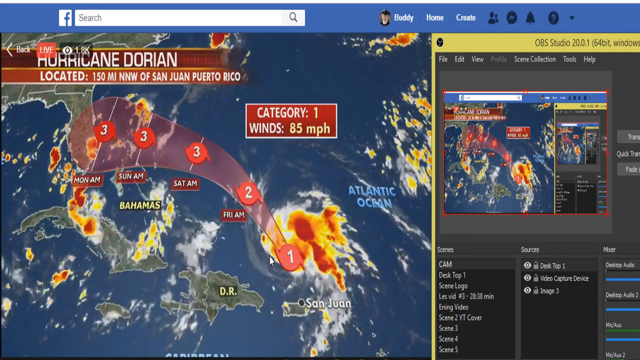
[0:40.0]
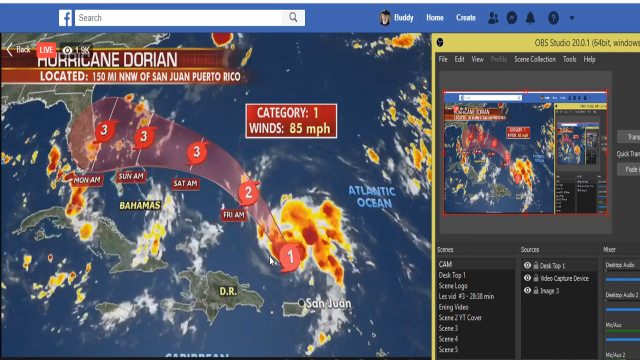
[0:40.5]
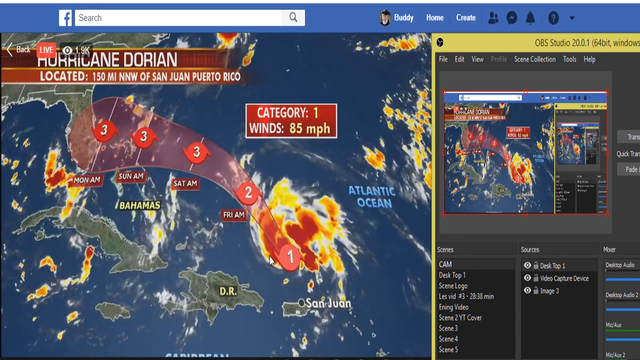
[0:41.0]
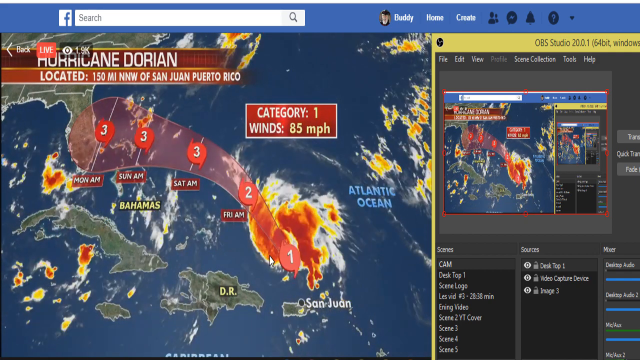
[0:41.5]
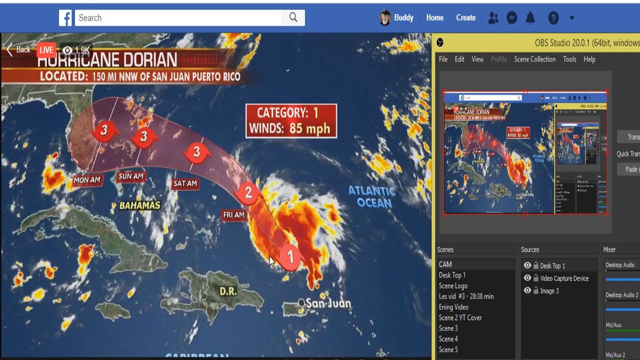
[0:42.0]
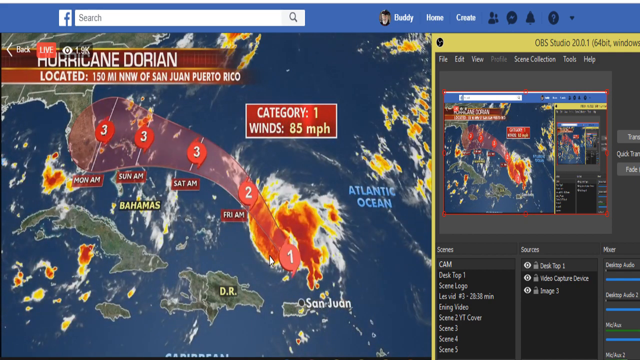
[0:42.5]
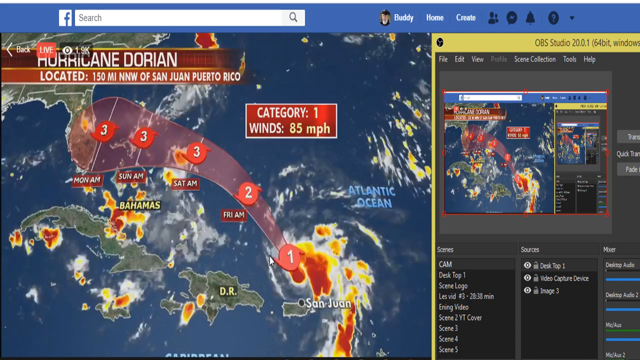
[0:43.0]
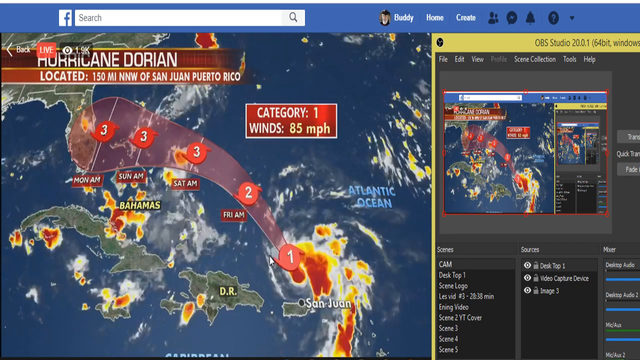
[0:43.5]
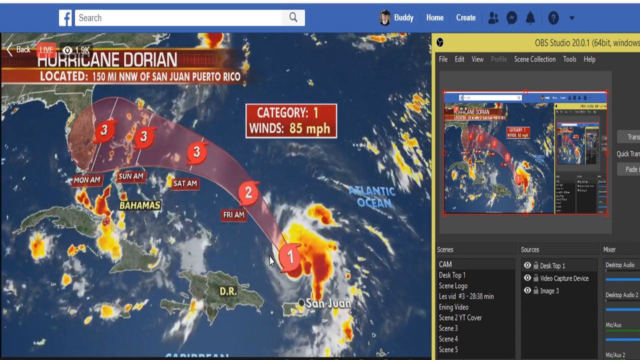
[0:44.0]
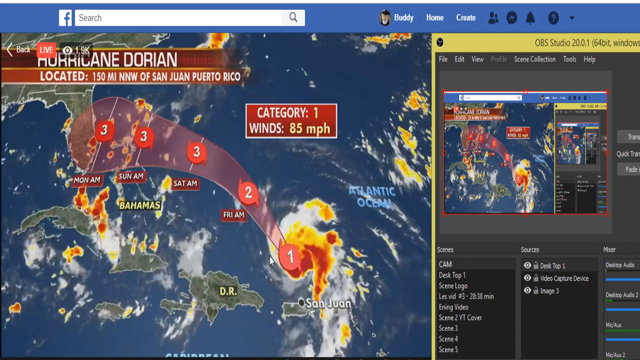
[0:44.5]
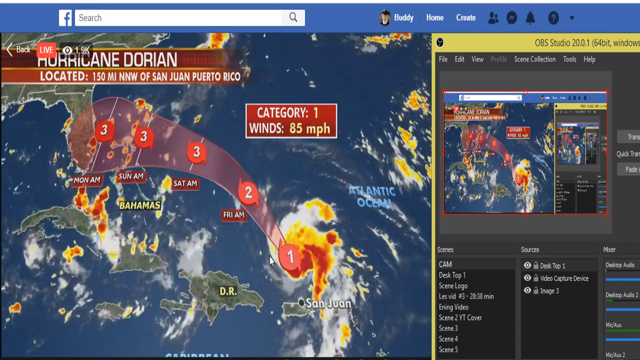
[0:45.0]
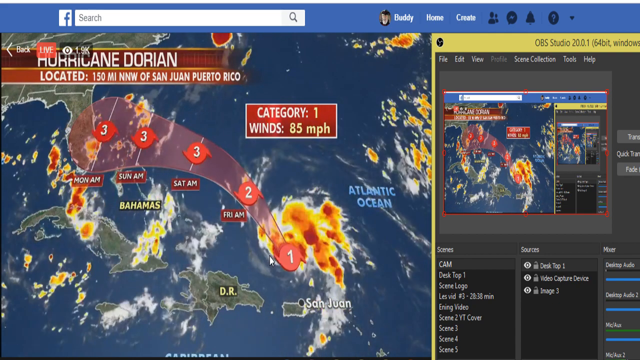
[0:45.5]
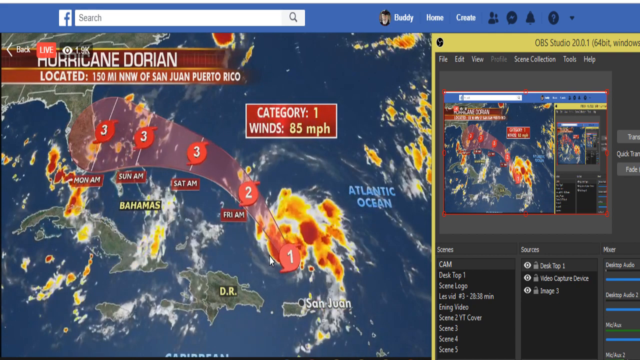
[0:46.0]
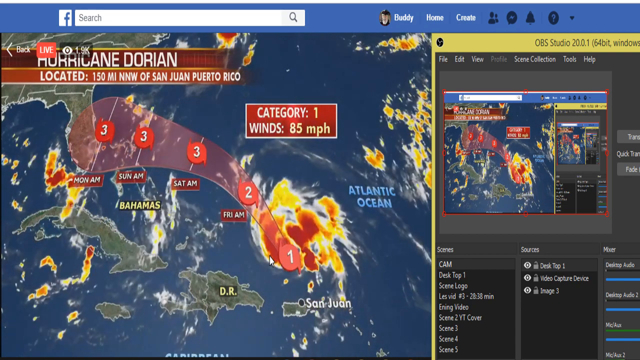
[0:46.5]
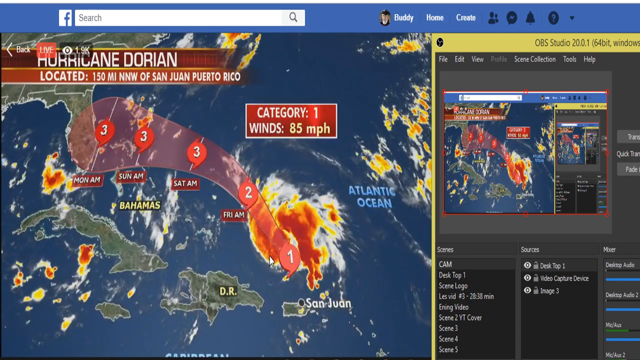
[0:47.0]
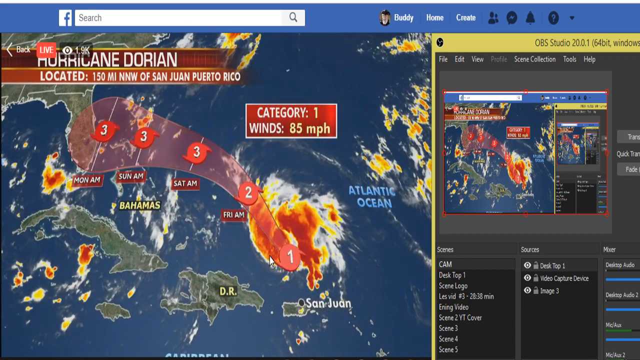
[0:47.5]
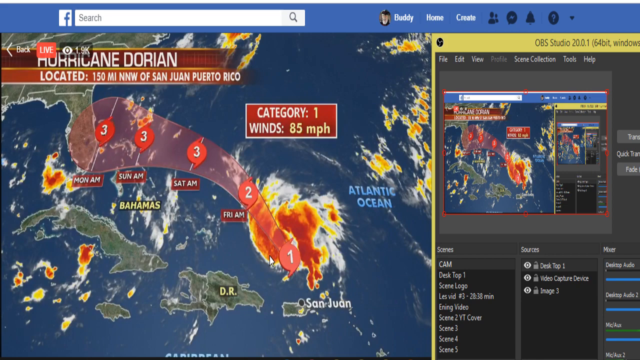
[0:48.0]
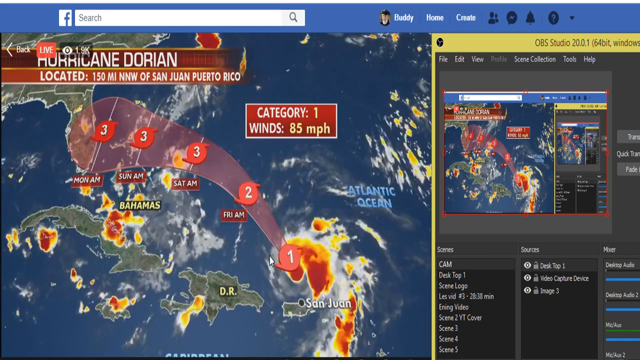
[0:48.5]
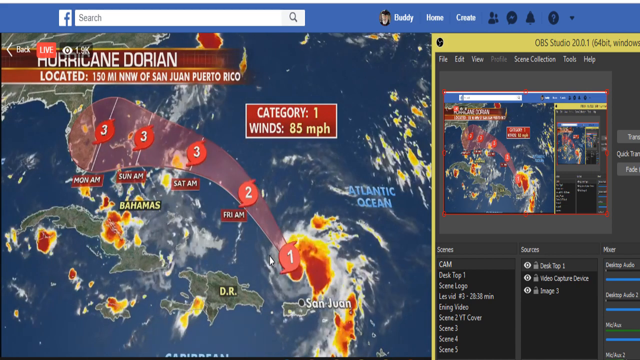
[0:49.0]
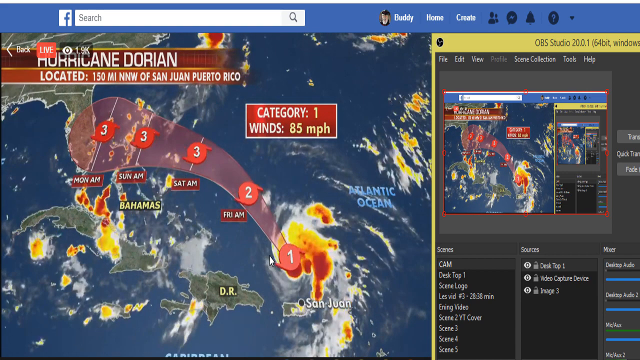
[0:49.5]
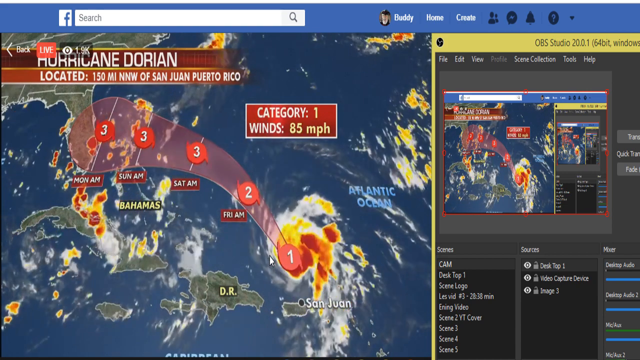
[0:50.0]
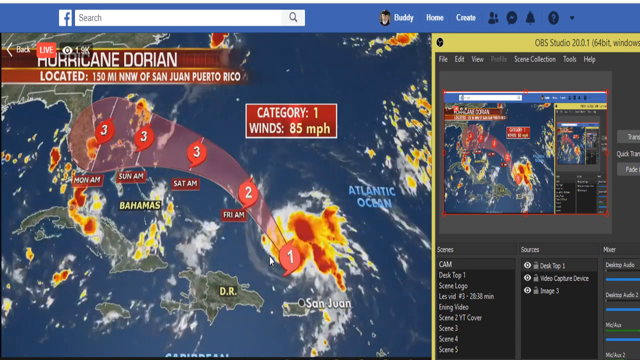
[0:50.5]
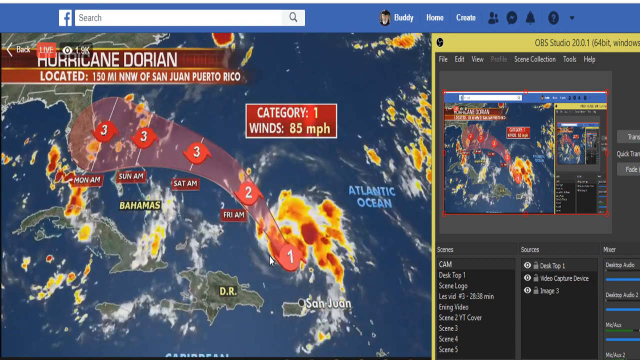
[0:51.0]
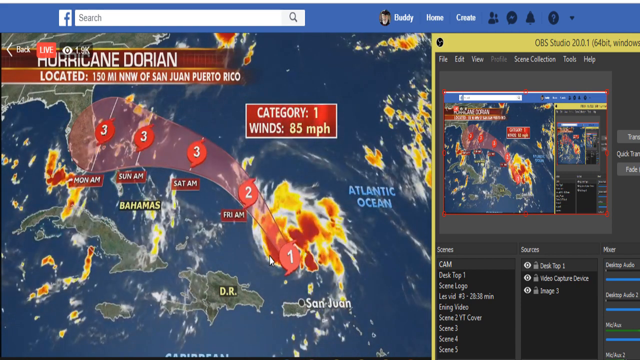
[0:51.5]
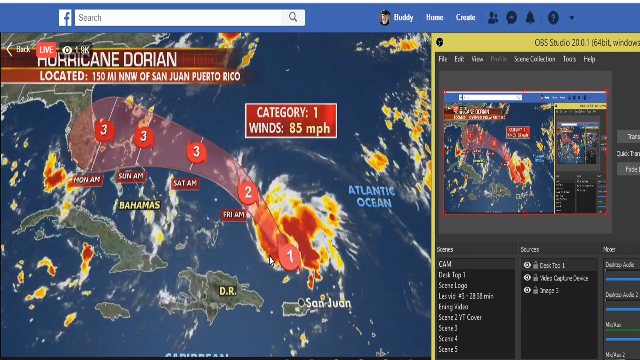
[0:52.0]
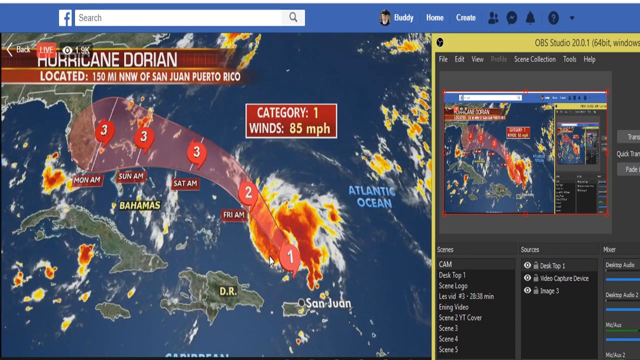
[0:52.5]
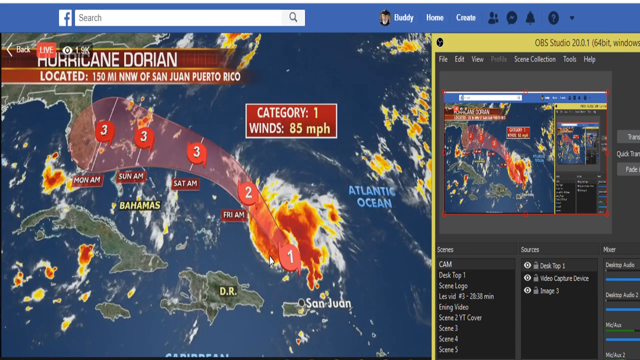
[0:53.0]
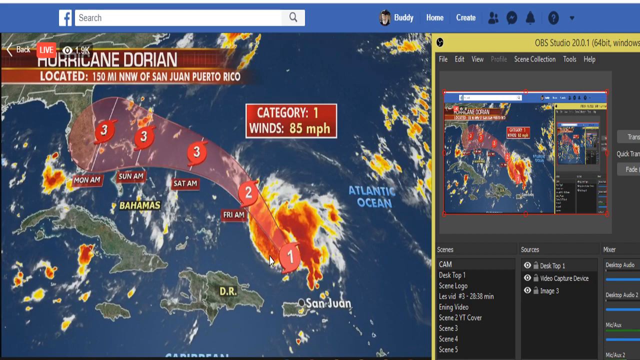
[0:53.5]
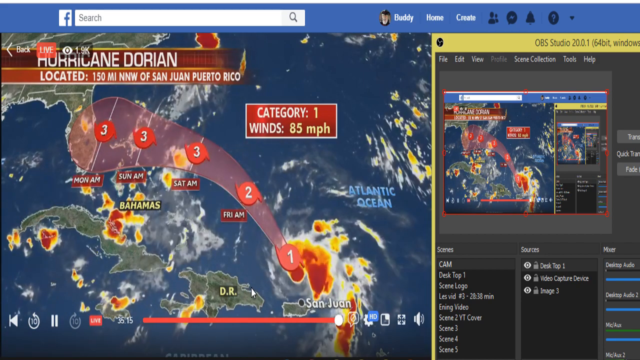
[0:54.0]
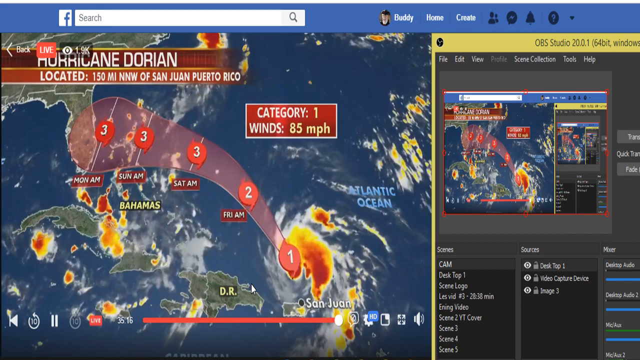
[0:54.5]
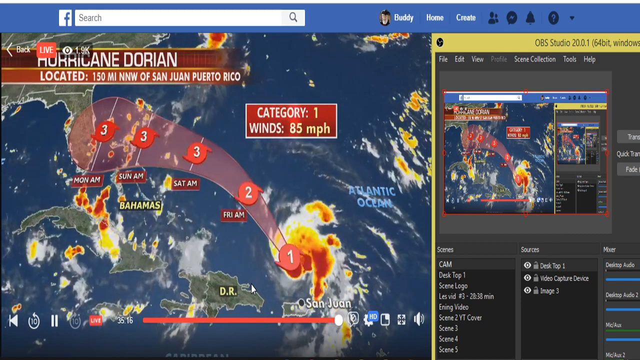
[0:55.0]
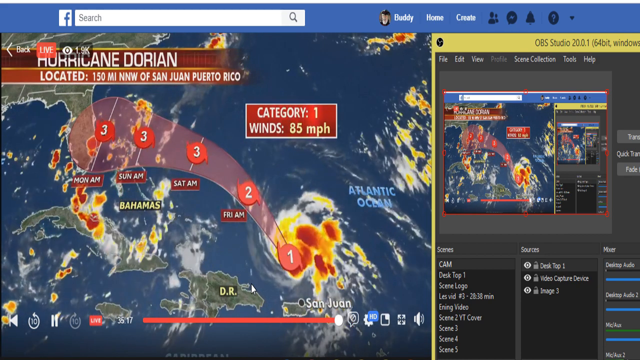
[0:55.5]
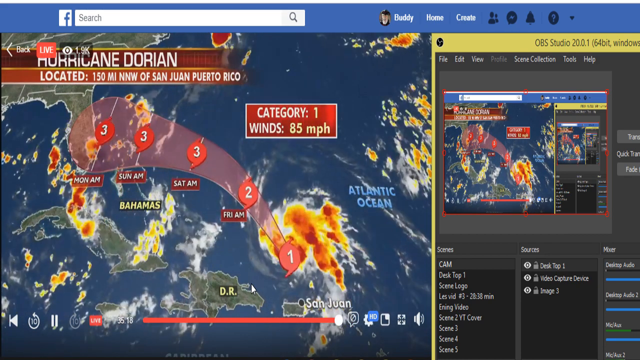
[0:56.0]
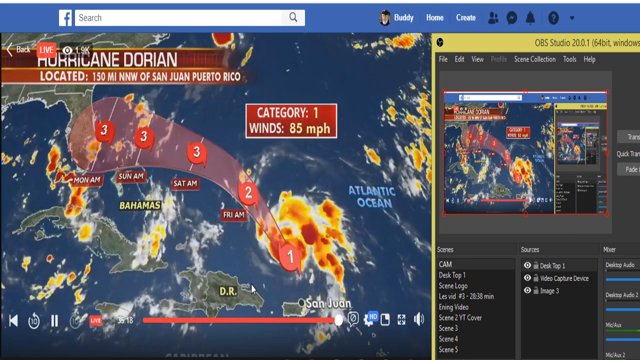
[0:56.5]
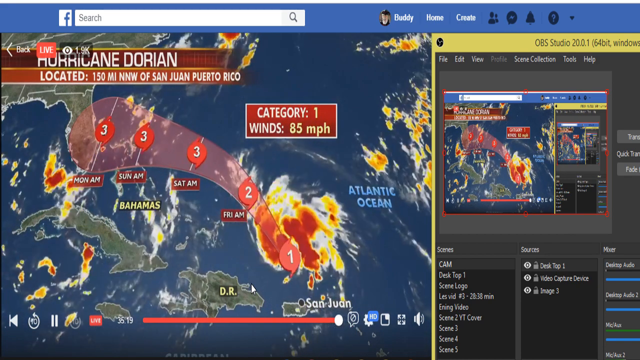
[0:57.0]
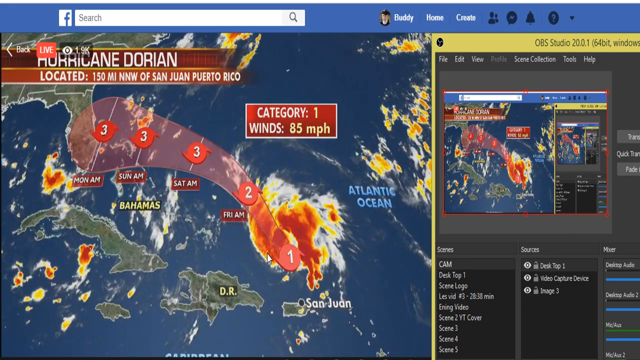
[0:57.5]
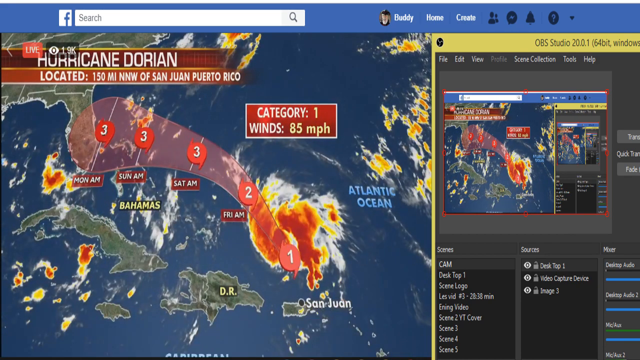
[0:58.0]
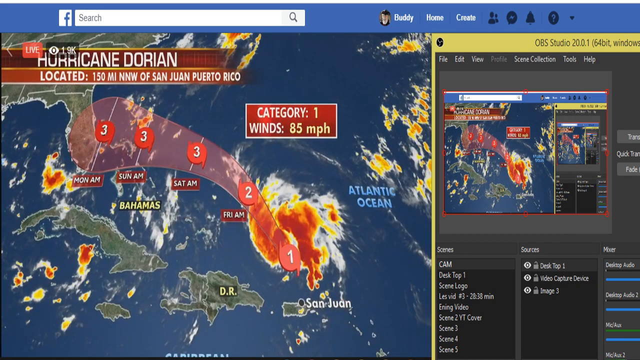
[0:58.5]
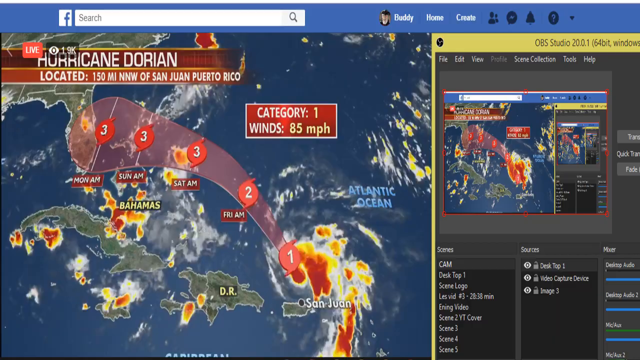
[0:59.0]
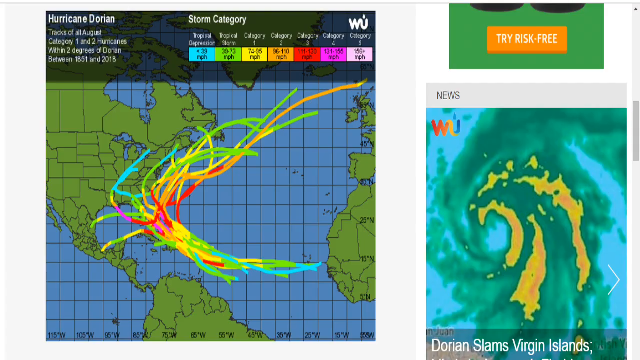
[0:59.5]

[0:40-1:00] The same image continues, with what kind of looks like an animation of the graphic depicting the hurricane moving at San Juan and how the clouds will progress over time. Briefly, another schematic map appears. During the loop, clouds move: not just the big cloud but also some smaller clouds near the Bahamas, also red, moving in a sort of circular motion. Near the end, the map changes briefly to what looks to be a farther zoomed-out, simpler map showing North America and South America, with the ocean in blue and the land in green, on which somebody has sort of drawn out the motions of the hurricane in different colored pens.